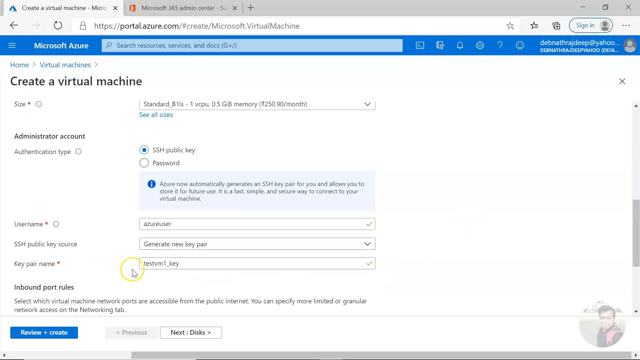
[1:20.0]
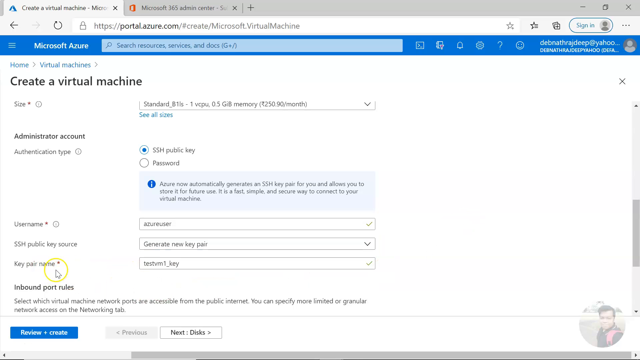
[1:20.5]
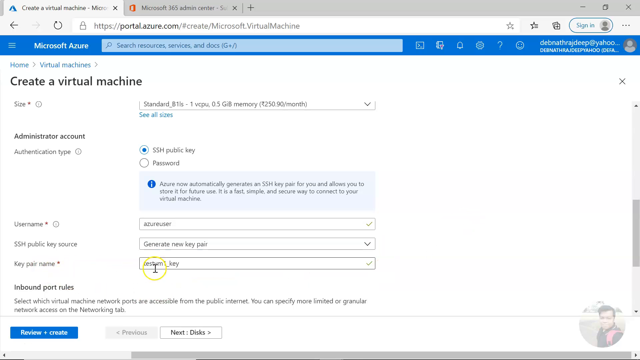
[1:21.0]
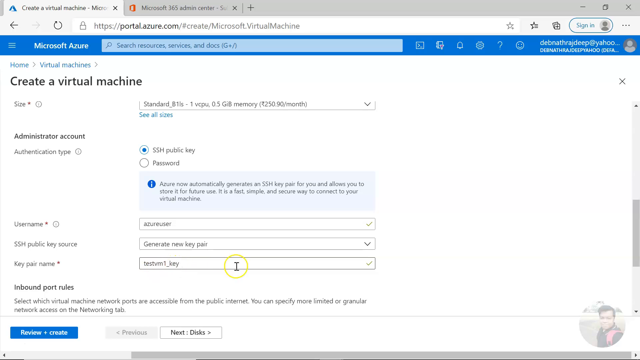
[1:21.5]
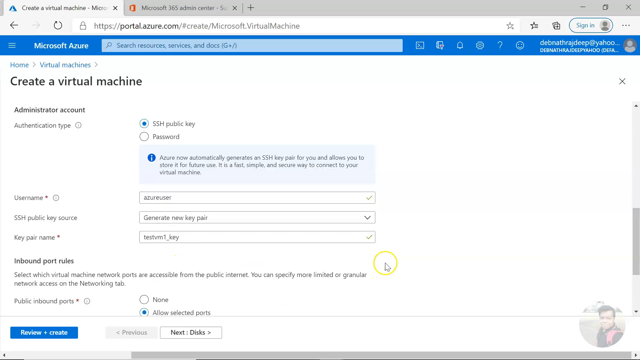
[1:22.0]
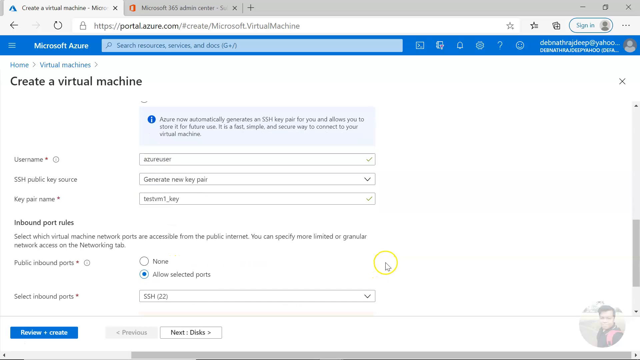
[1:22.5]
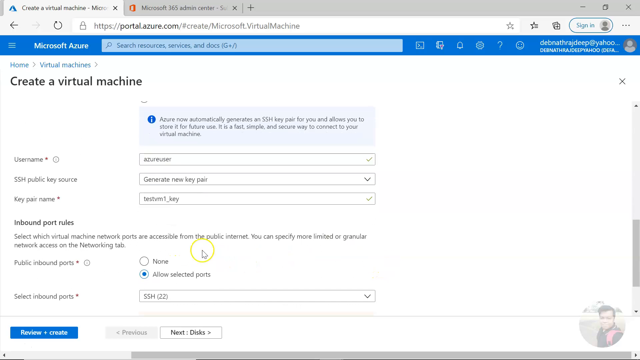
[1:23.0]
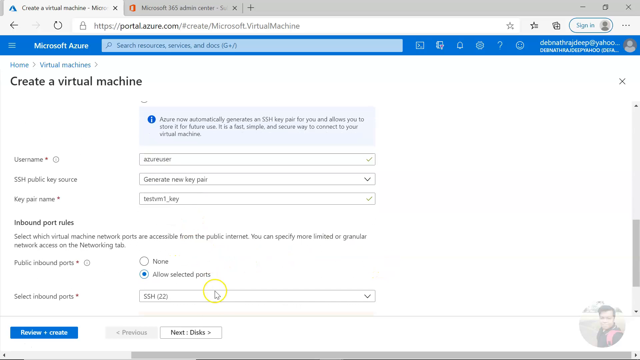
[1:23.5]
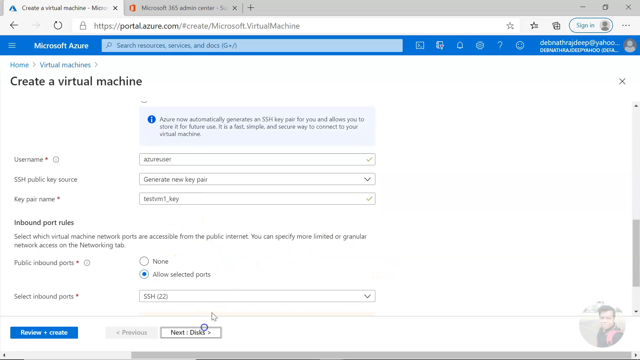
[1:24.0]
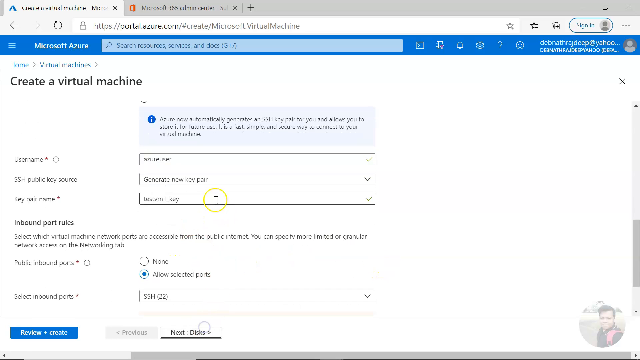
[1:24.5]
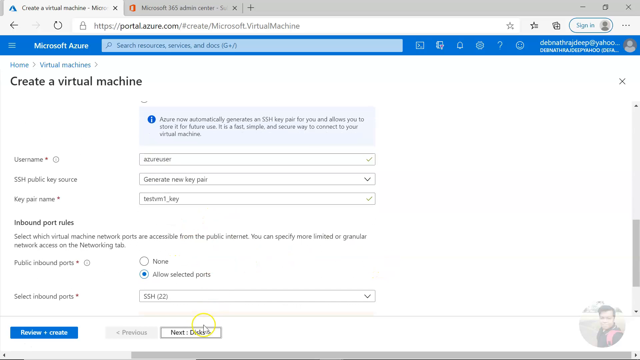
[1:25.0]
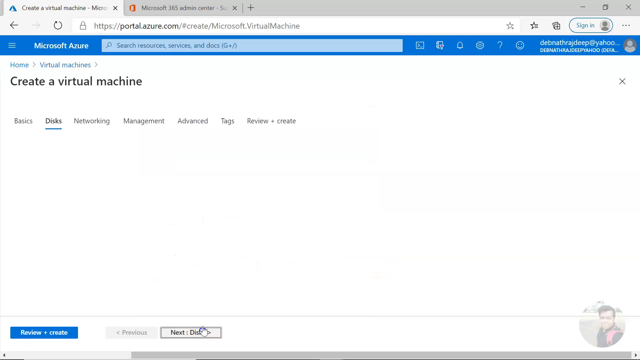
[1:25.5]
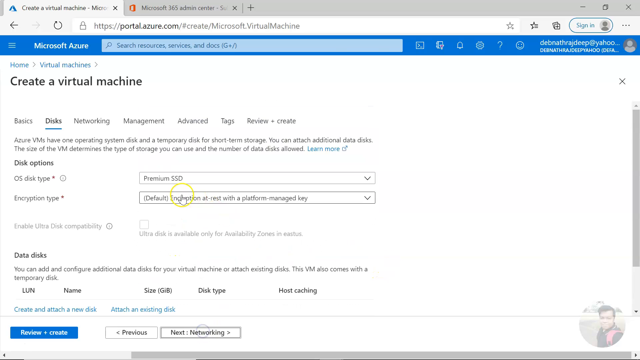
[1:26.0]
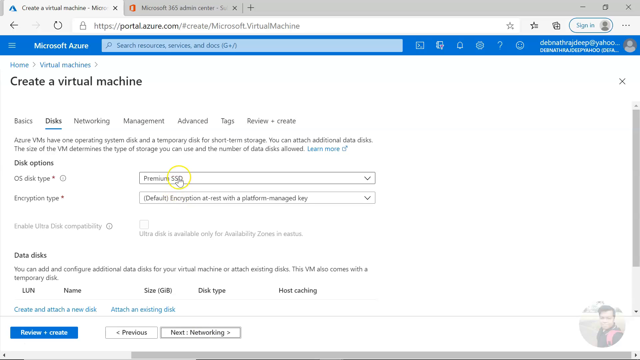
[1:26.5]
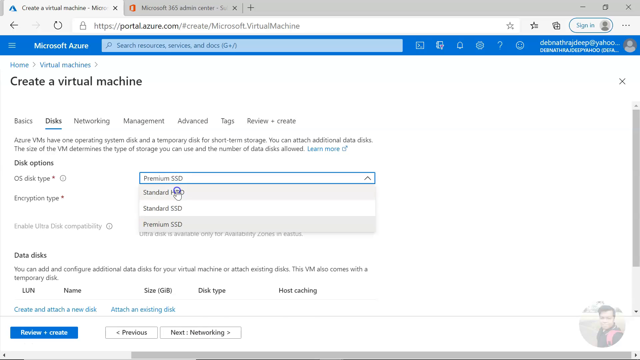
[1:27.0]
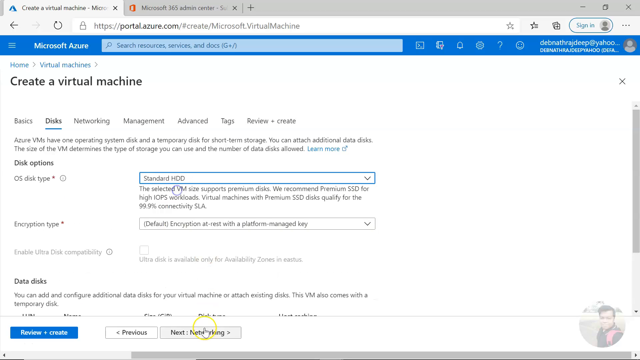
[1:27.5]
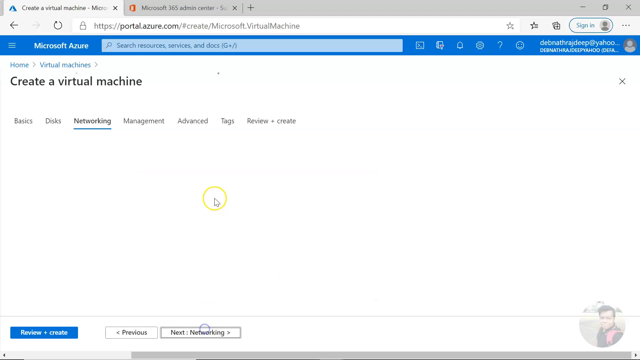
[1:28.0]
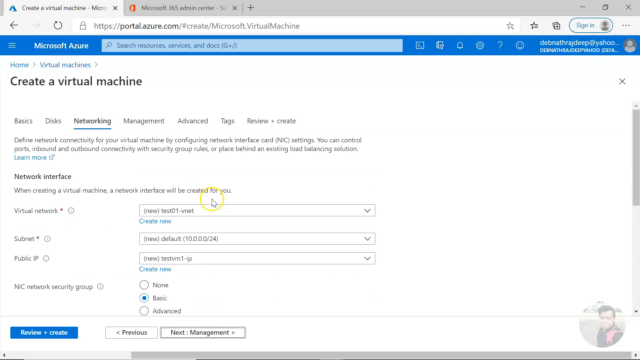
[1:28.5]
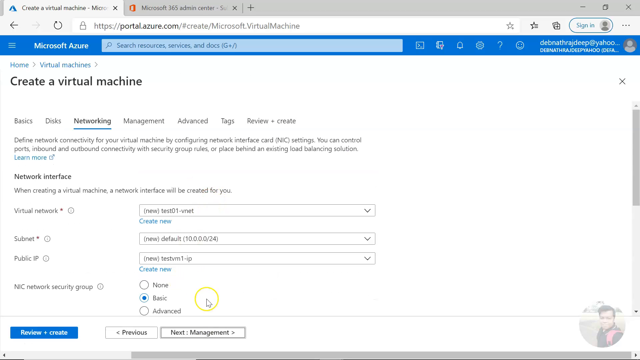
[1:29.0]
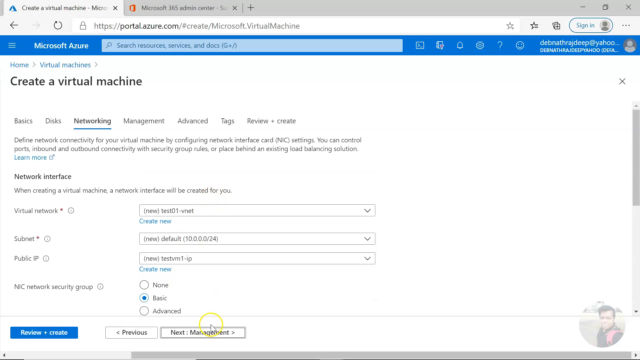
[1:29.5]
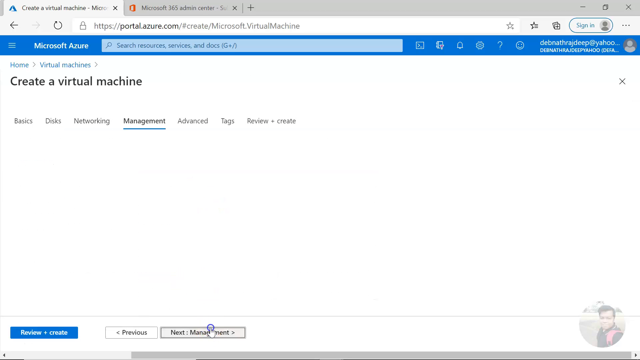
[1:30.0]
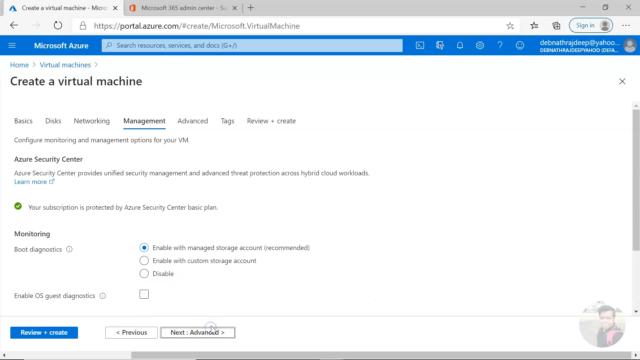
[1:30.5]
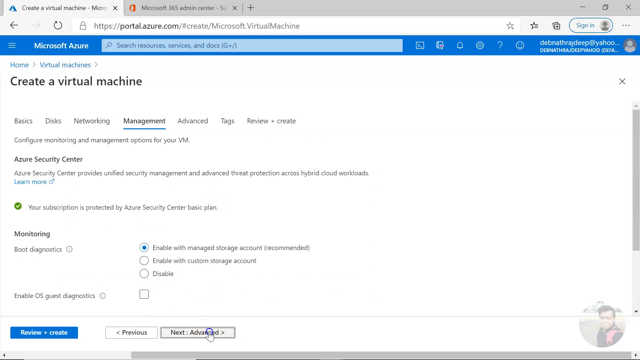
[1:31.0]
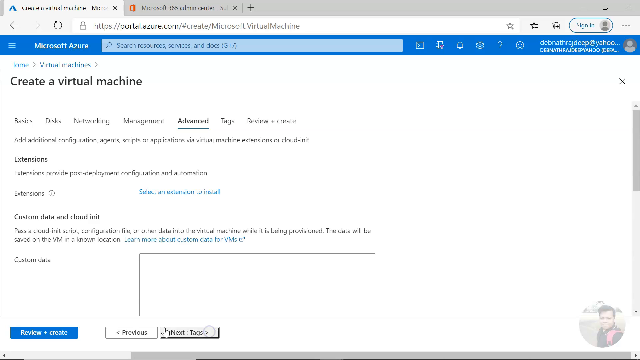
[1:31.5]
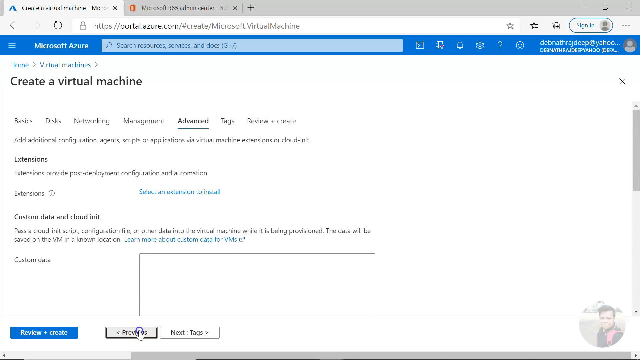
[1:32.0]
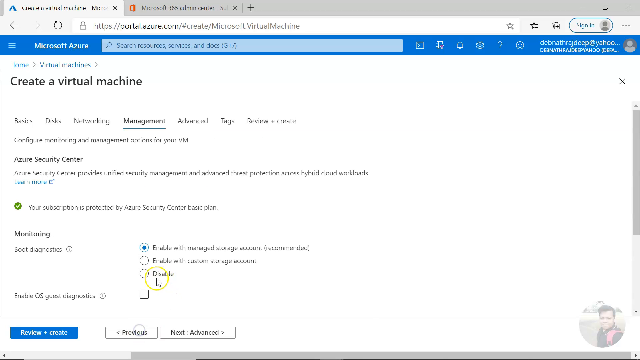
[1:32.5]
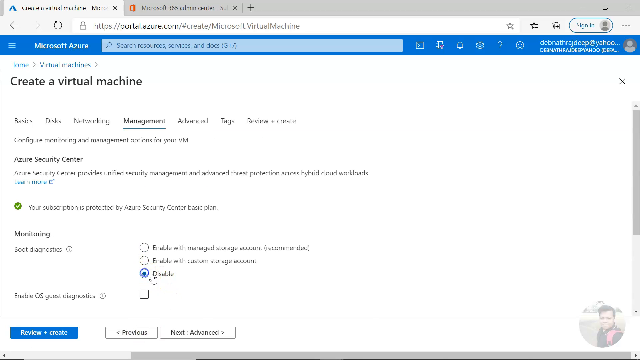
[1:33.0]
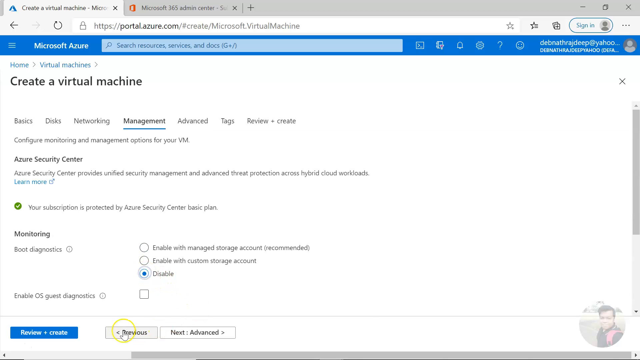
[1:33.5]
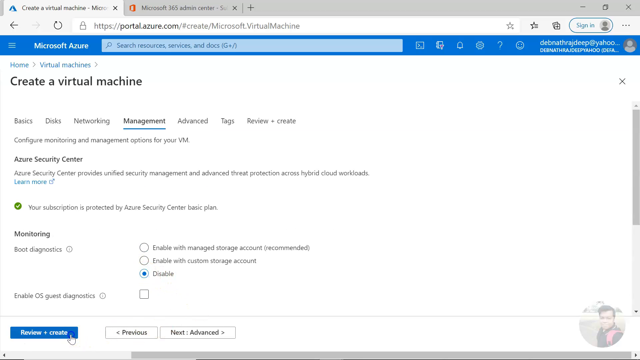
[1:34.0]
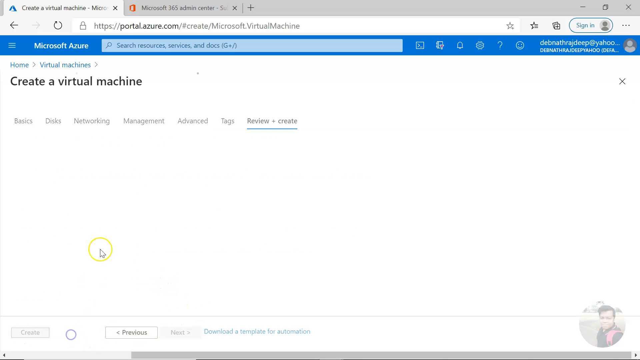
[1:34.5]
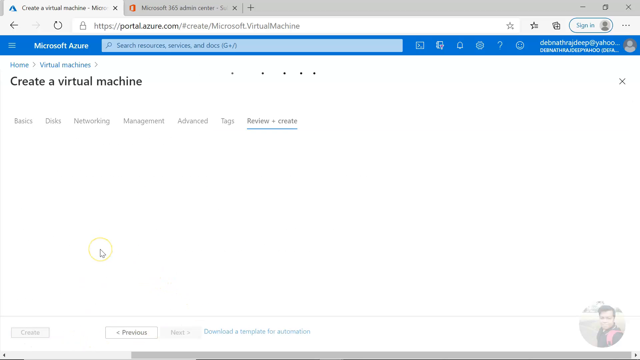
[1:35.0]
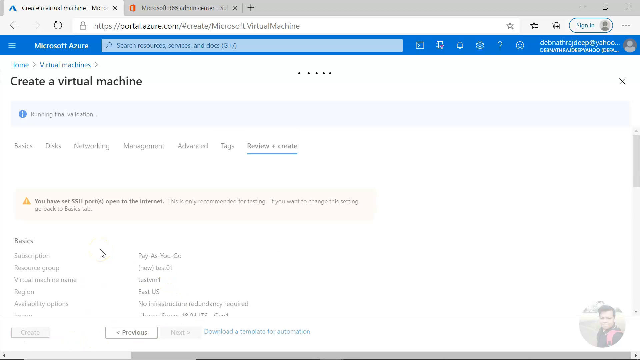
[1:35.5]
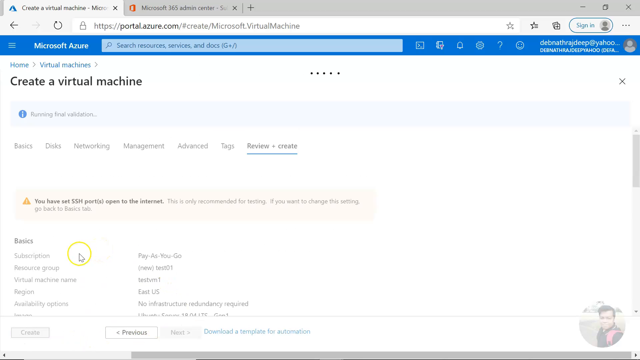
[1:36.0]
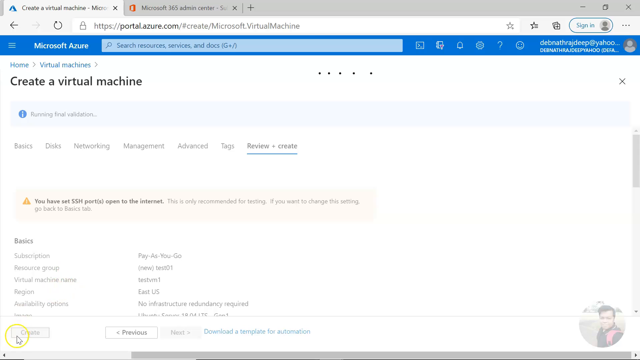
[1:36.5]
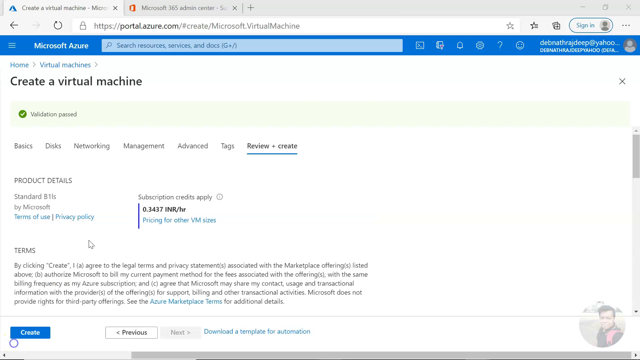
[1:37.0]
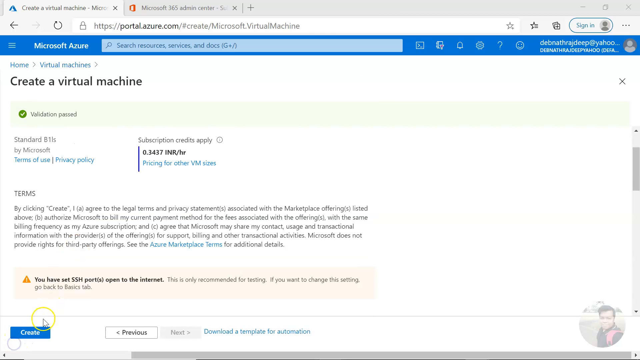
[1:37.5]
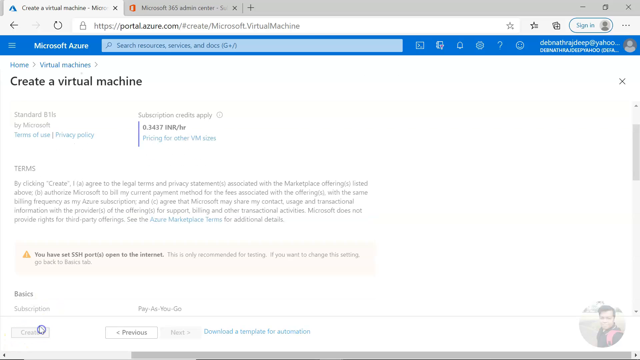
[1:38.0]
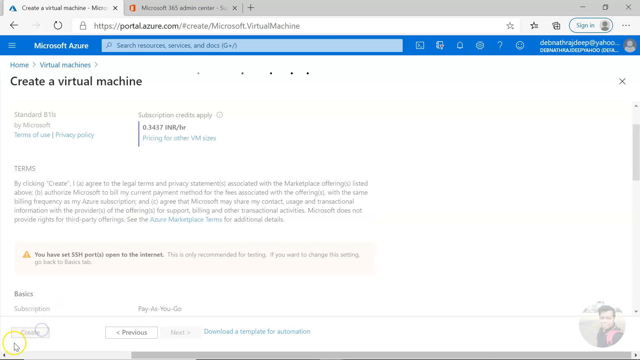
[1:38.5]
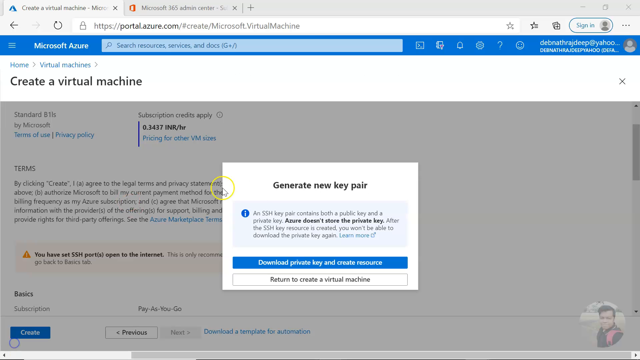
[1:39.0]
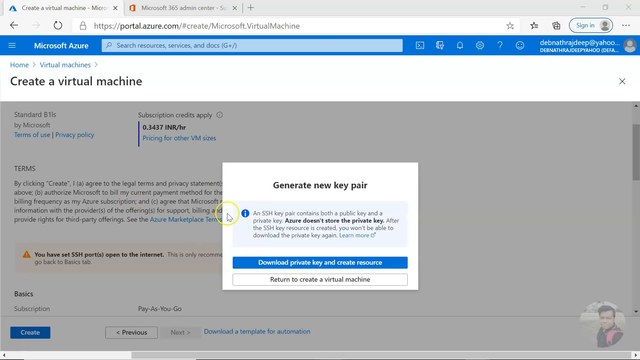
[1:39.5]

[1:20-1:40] On the "Create a virtual machine" page of portal.azure.com, the user hovers the cursor over the key pair name drop-down menu, which reads "testvm1_key". They scroll down the page and click the "Next: disks" button at the bottom left of the screen. The Disks page opens, with the Disks tab at the top underlined. The cursor clicks the drop-down menu next to OS disk type under disk options and selects the first option, "Standard HDD". The user clicks the "Next: Networking" button at the bottom of the screen, moving to the Networking tab, then the "Next: management" button, moving to the Management tab. They click forward to the "Next: advanced" button, which opens the Advanced page, but quickly click the previous button, returning to the Management page. There they select the disable radio option under boot diagnostics in the monitoring section, then click the "Review plus create" button in the left-hand corner. The Review plus create tab opens, with a loading graphic of small black squares at the top of the screen. When the page finishes loading, a message reads "Validation passed", along with product details and terms. The user goes to the bottom left of the page and clicks the blue "Create" button, and the loading graphic appears at the top again. A white square pop-up box appears, titled "Generate new key pair", with a message about what an SSH key pair contains and that Azure doesn't store the private key. It has a blue button reading "Download private key and create resource" and, underneath, a white button reading "Return to create a virtual machine". The mouse hovers over the pop-up.